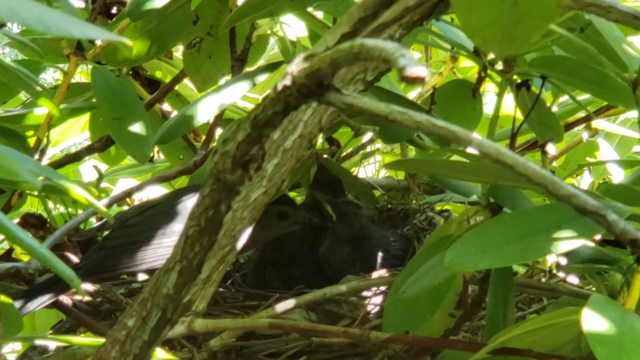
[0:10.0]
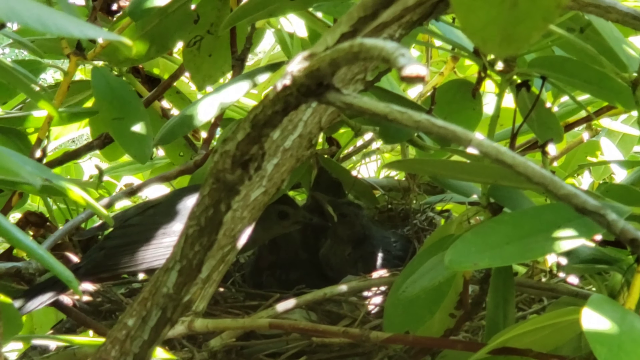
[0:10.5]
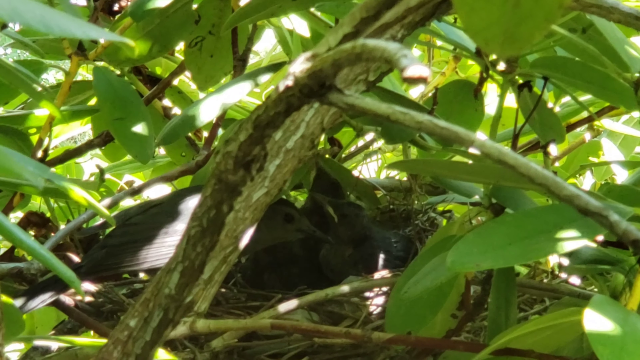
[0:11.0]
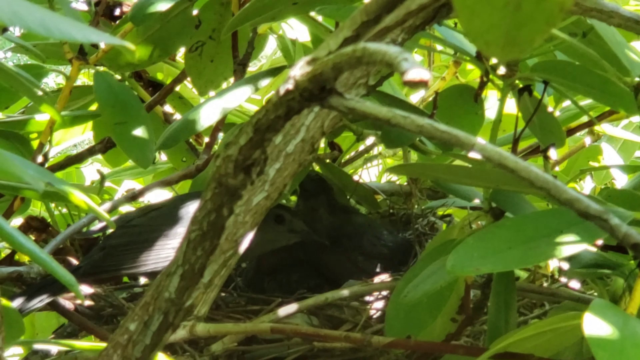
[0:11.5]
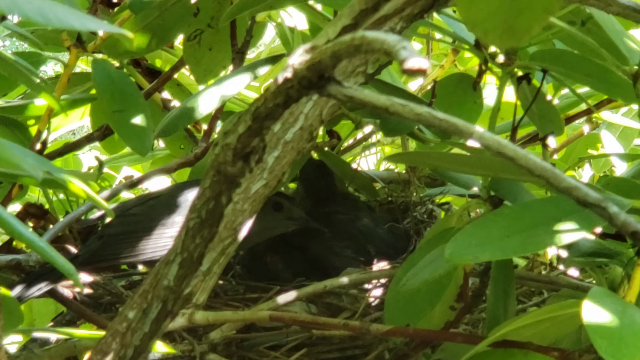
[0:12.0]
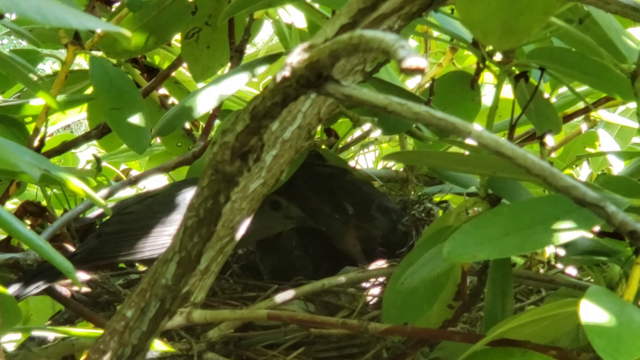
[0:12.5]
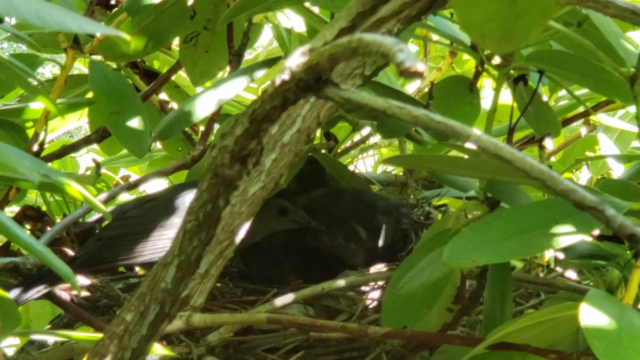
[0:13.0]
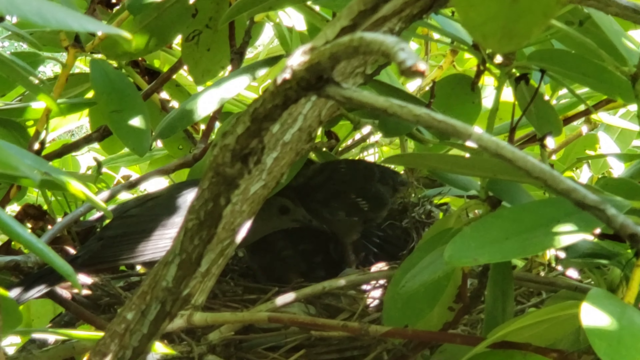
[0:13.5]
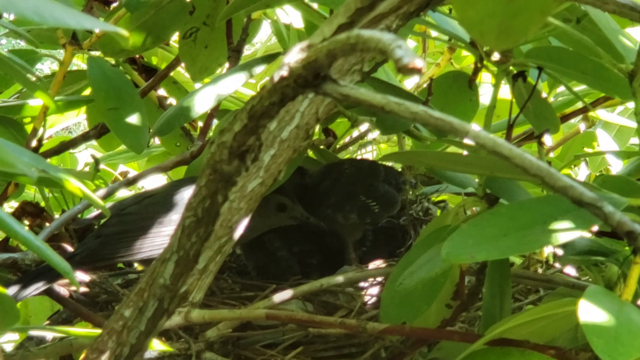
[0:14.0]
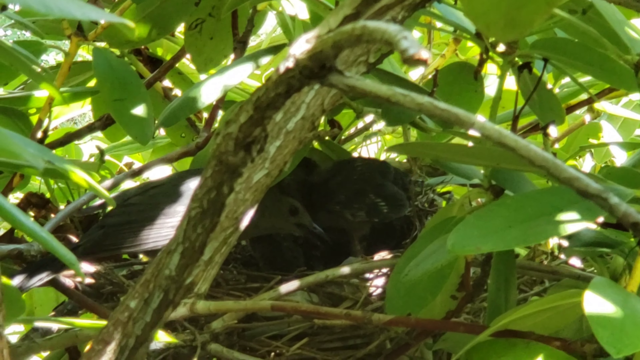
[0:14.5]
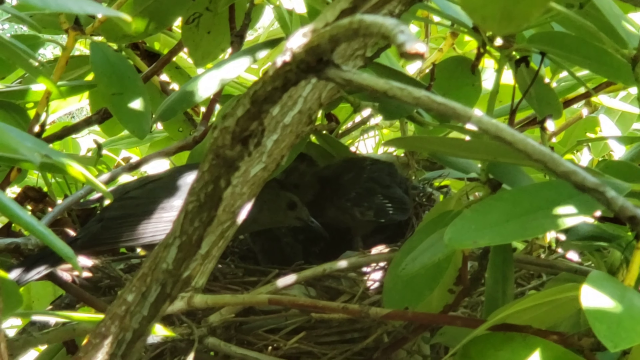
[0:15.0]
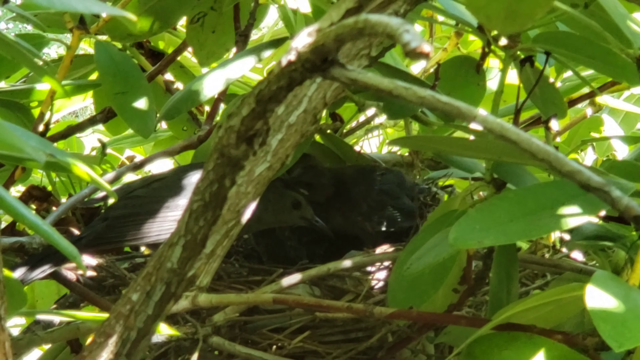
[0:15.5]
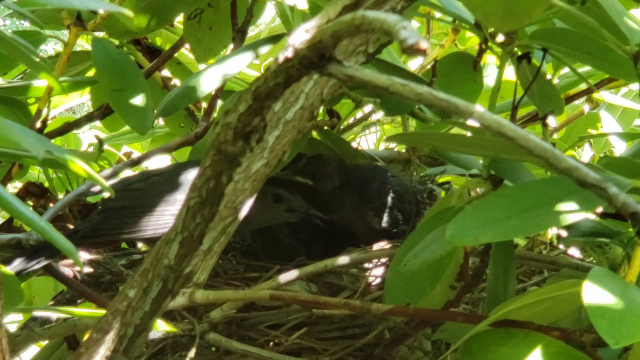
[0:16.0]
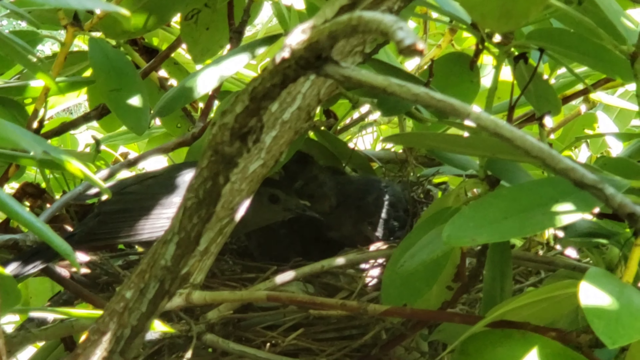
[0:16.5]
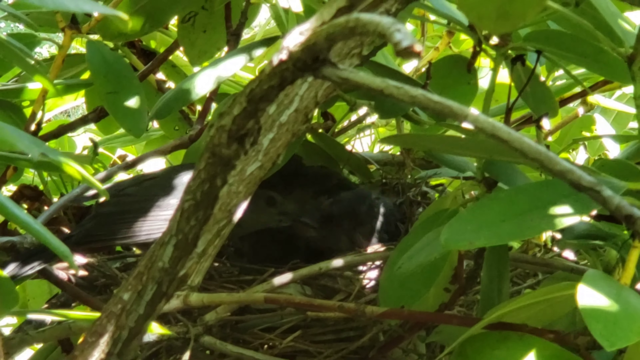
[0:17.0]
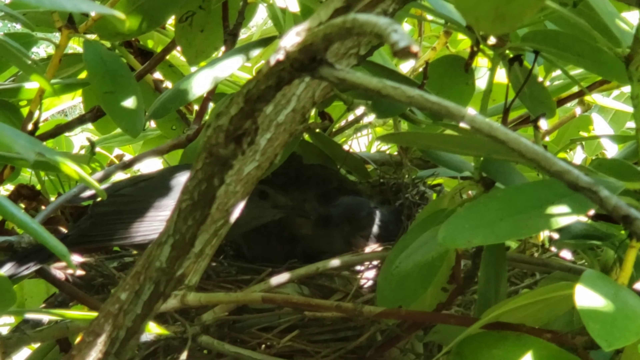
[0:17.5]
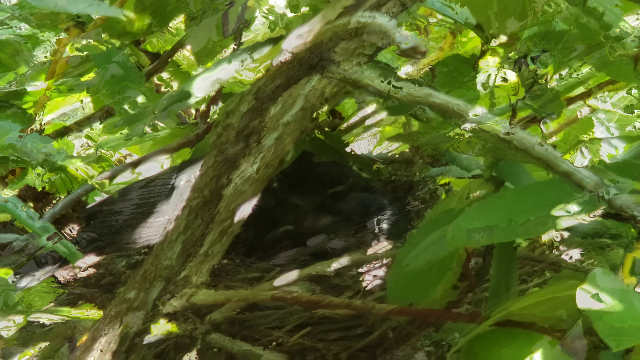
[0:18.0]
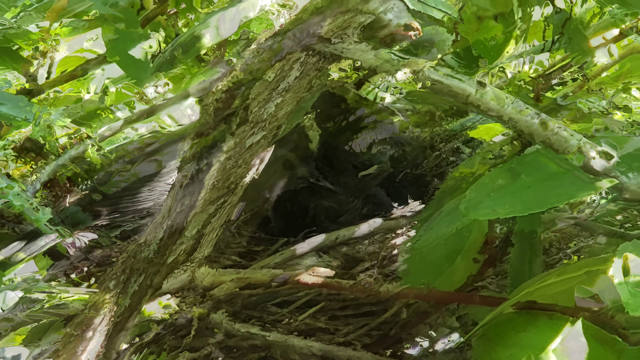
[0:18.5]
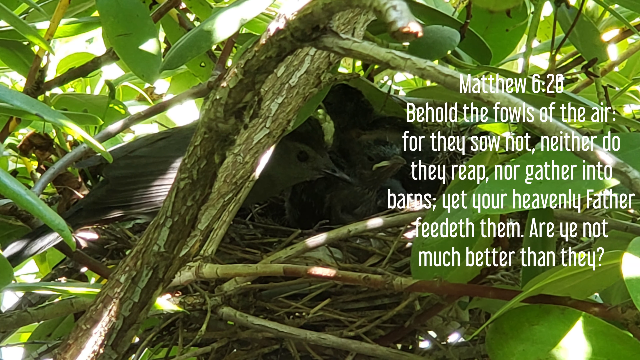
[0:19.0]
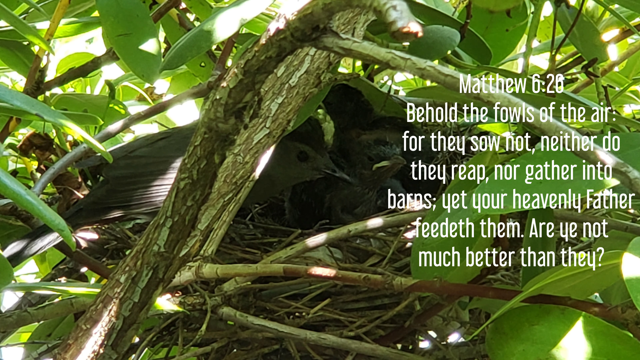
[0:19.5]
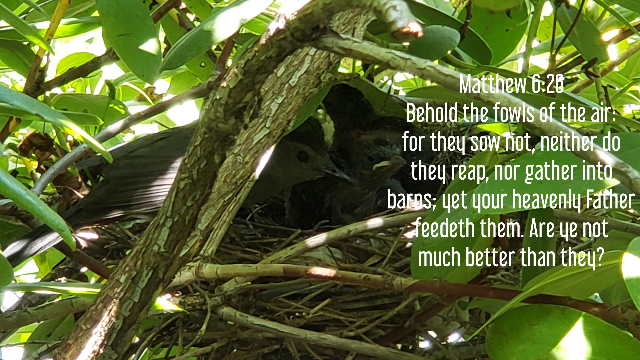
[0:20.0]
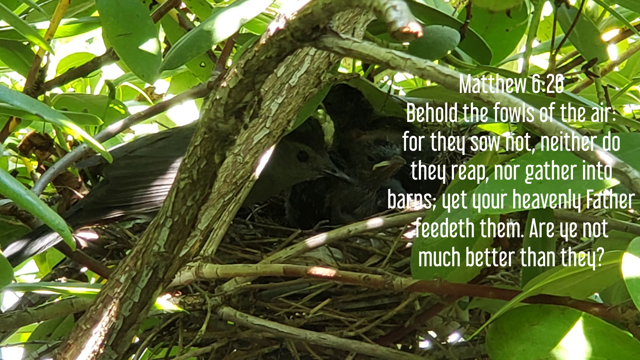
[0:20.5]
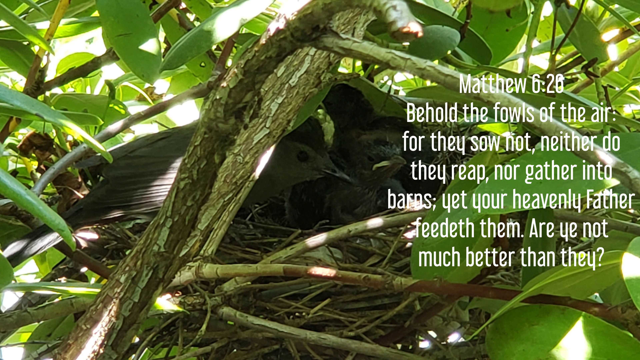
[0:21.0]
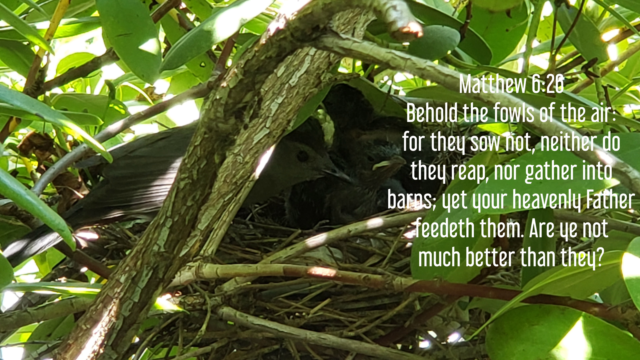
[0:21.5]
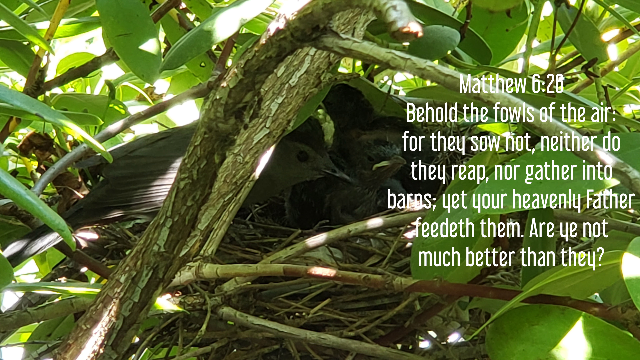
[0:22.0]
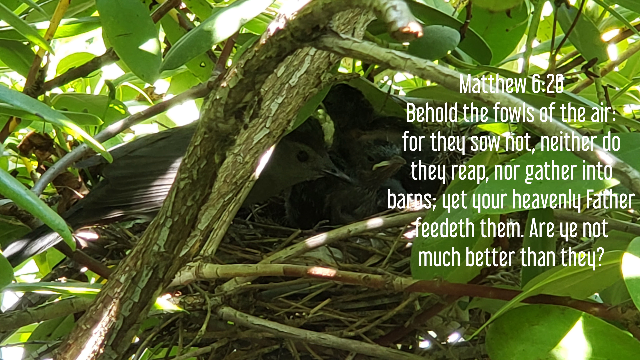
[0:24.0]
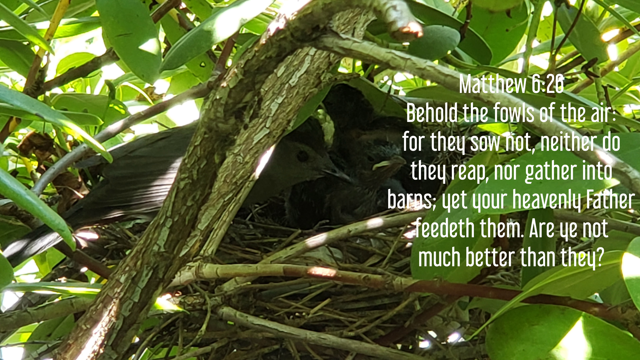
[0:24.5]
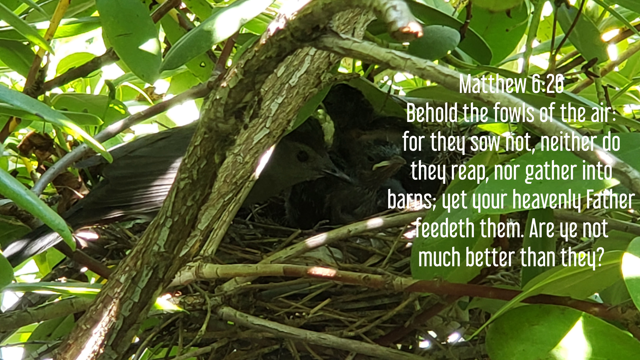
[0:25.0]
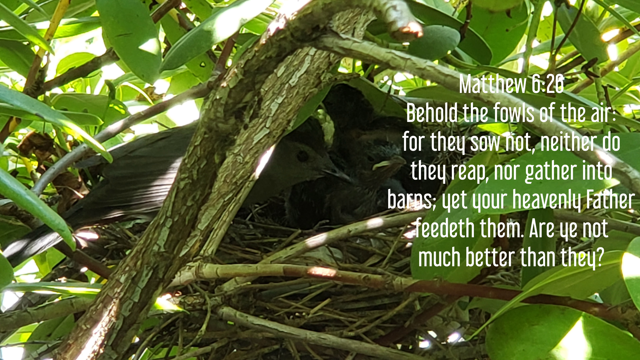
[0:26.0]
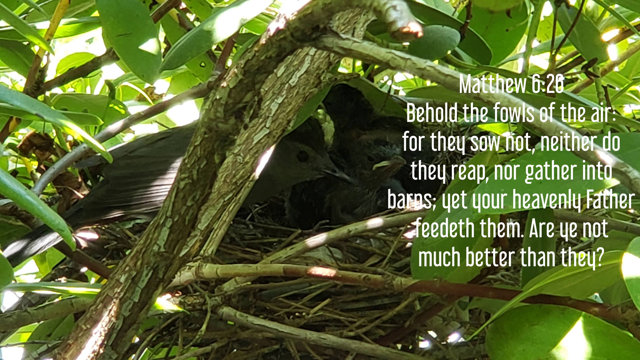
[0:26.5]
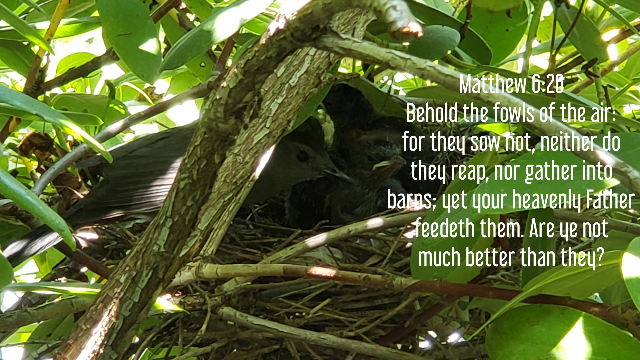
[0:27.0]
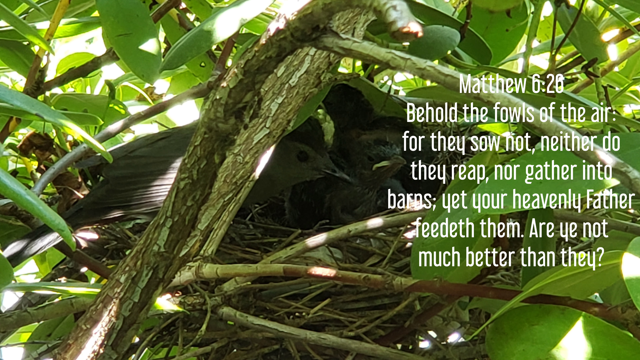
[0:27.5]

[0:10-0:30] A parent bird appears to be looking straight into the camera, showing its black eyes and a face in a lighter shade of grey. The chicks are still moving around. Sunlight passes through the gaps in the leaves, showing the day is bright. The video suddenly cuts to another shot where text appears, apparently a Bible verse: "Matthew 6:26", with the lines "Behold the fowls of the air, for they sow not, neither do they reap" and "yet your heavenly Father feedeth them. Are ye not much better than they?" The shot then pauses and stays on this screen for a number of seconds.